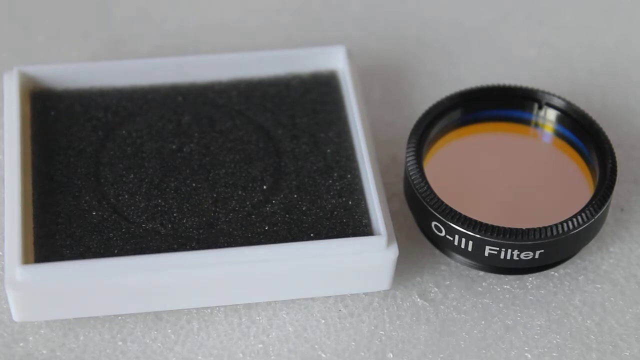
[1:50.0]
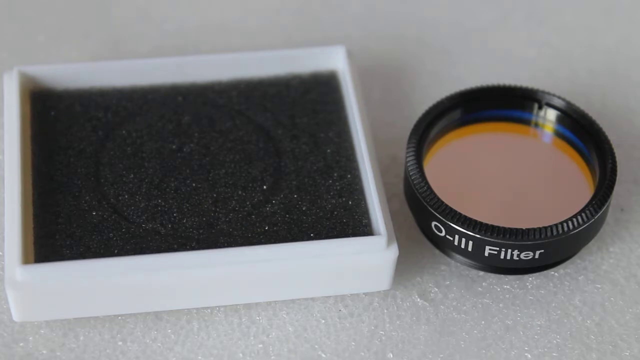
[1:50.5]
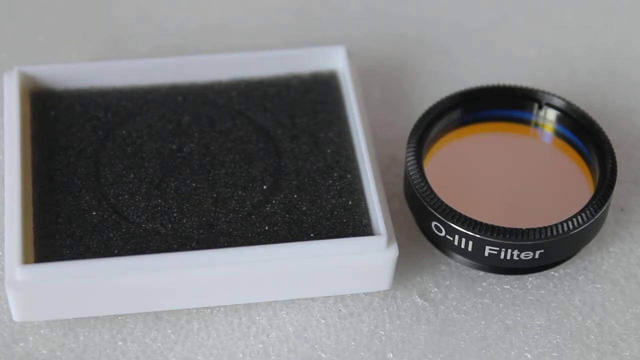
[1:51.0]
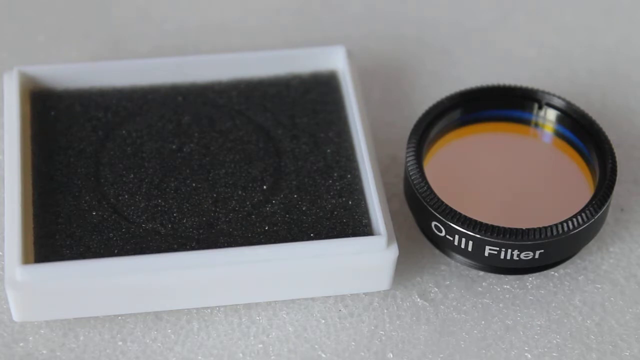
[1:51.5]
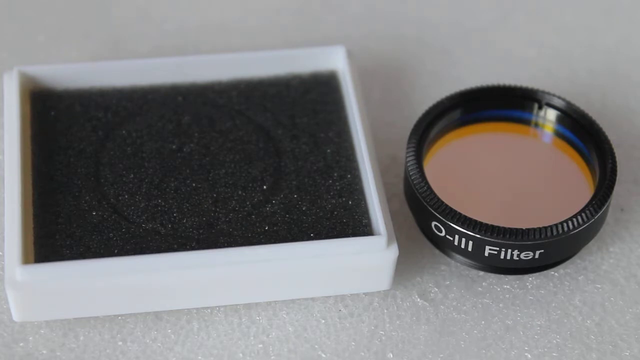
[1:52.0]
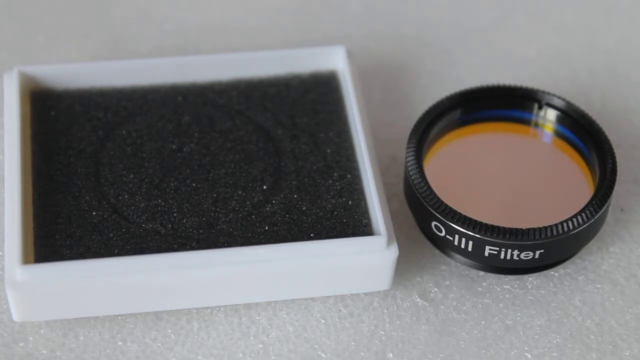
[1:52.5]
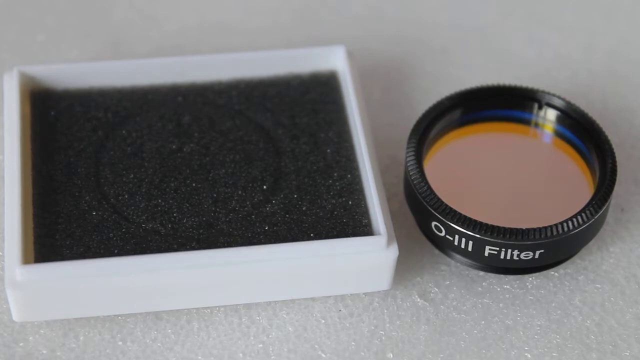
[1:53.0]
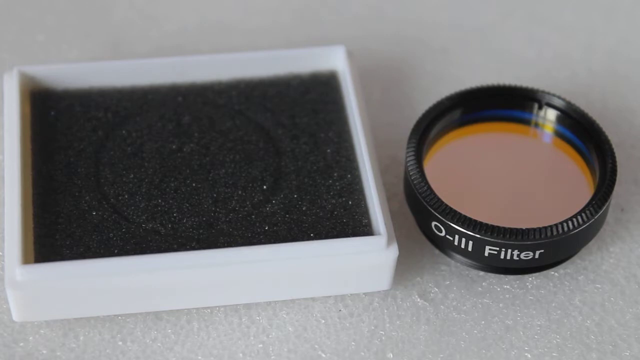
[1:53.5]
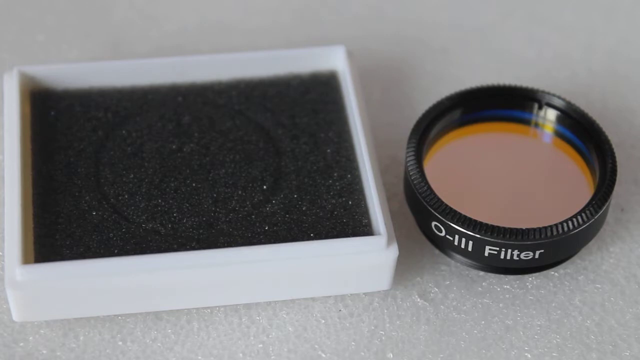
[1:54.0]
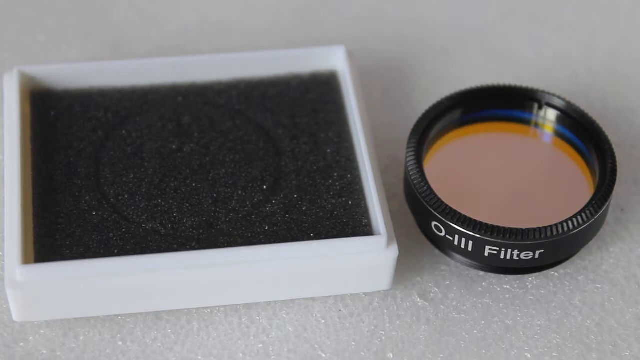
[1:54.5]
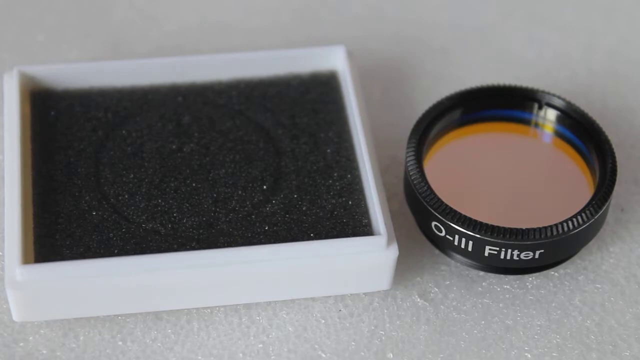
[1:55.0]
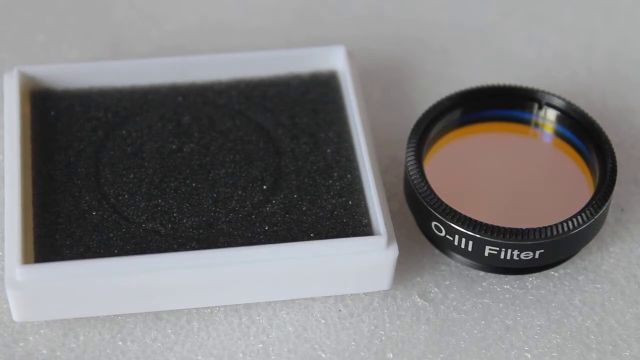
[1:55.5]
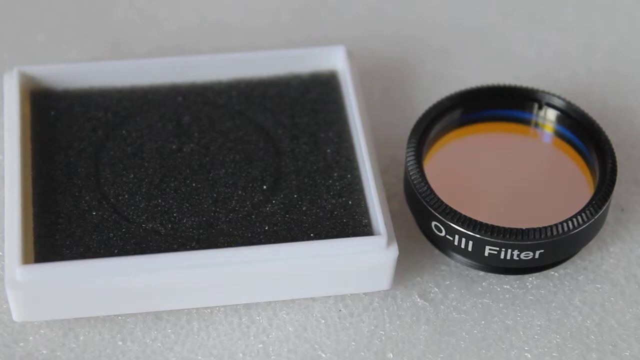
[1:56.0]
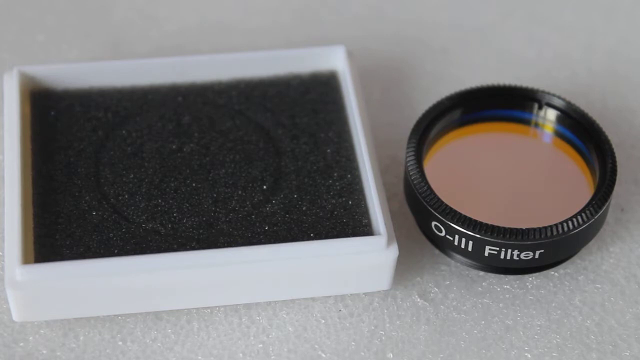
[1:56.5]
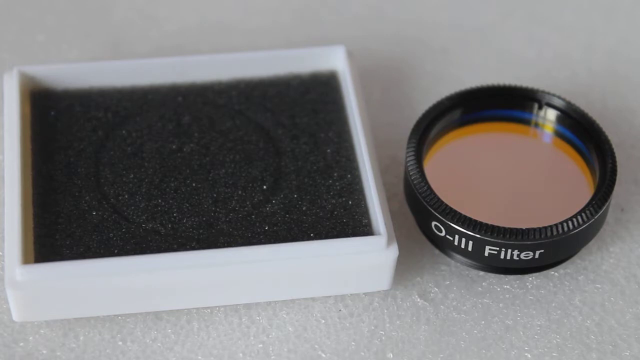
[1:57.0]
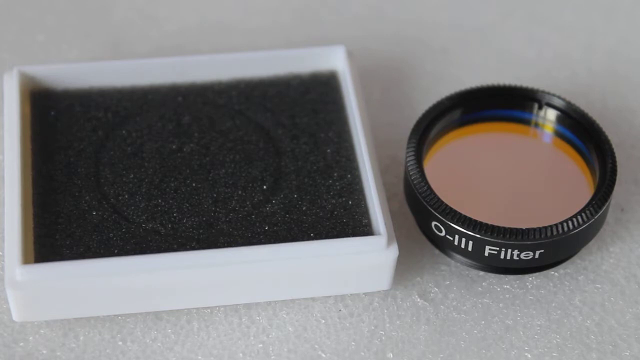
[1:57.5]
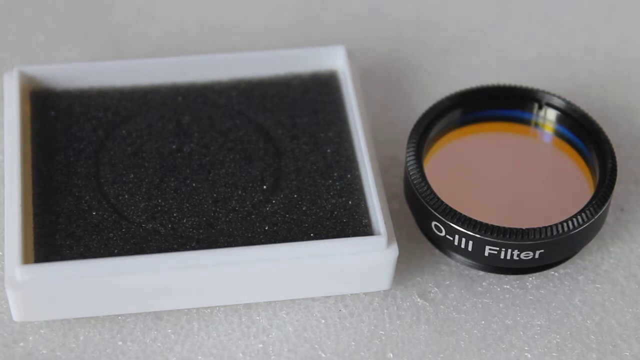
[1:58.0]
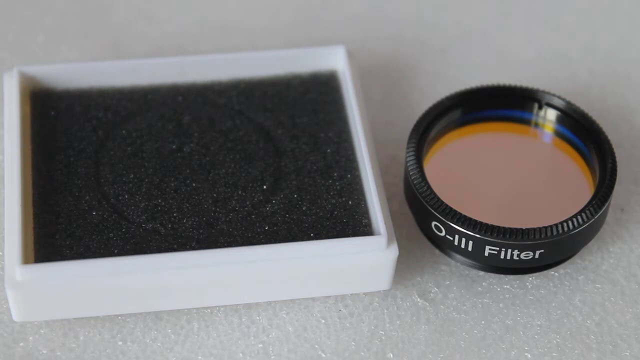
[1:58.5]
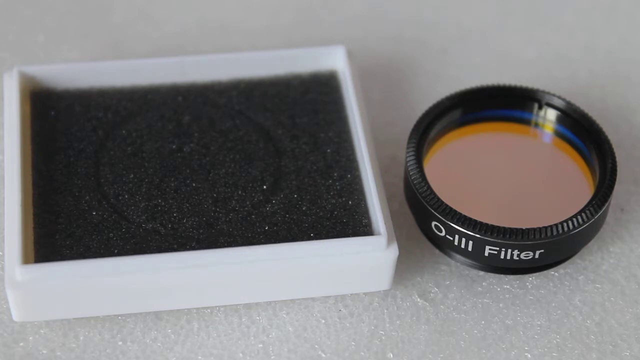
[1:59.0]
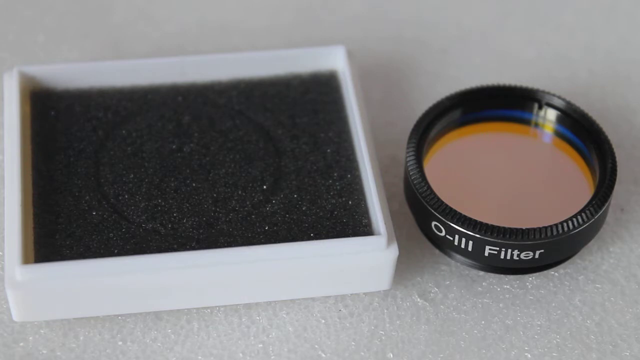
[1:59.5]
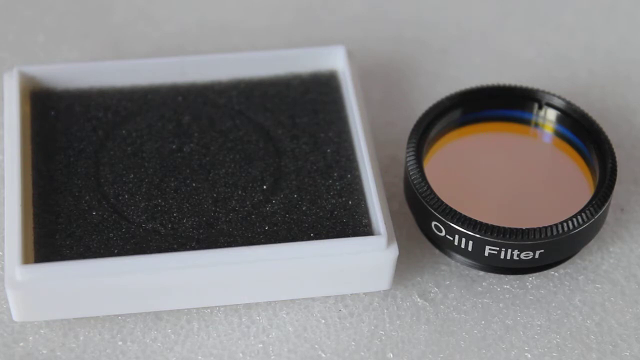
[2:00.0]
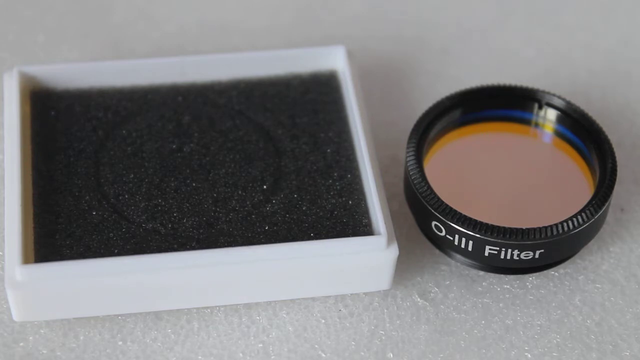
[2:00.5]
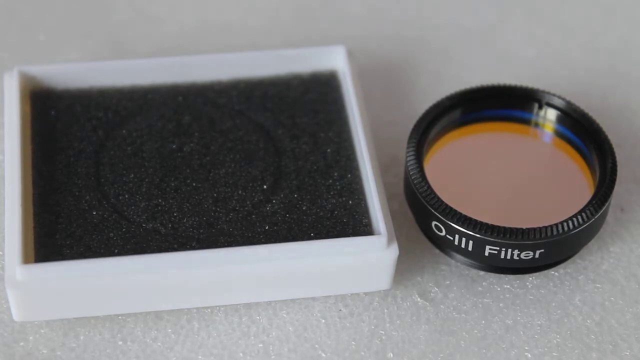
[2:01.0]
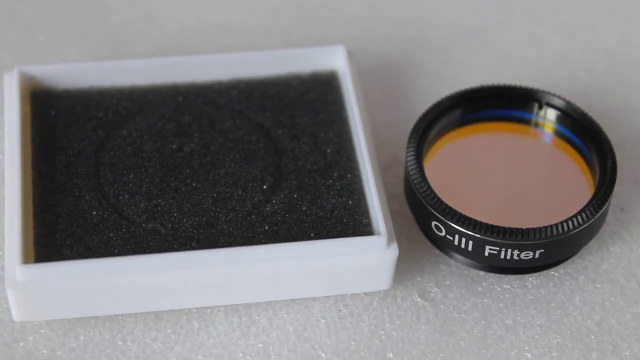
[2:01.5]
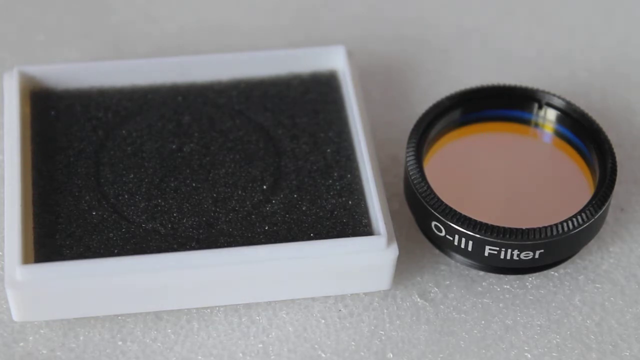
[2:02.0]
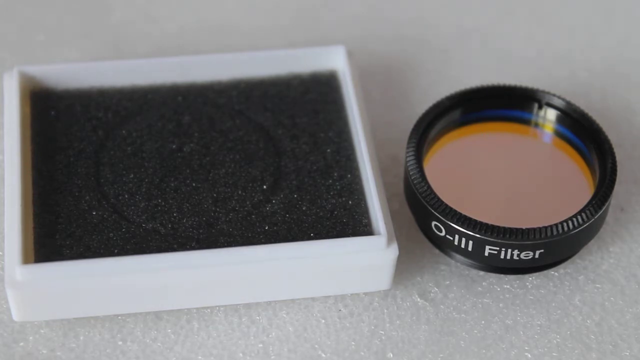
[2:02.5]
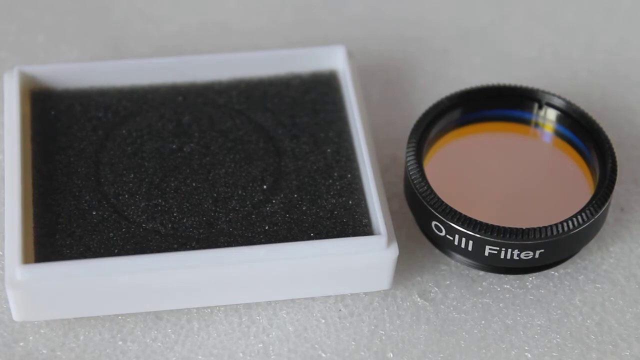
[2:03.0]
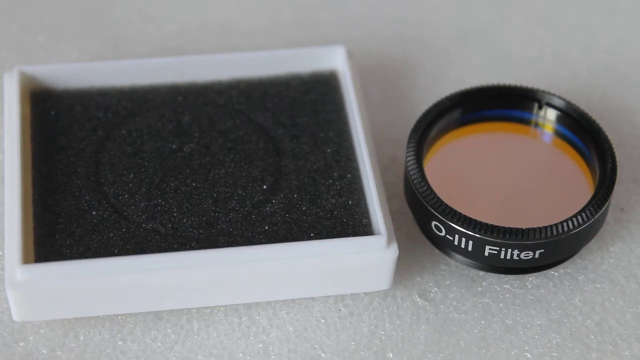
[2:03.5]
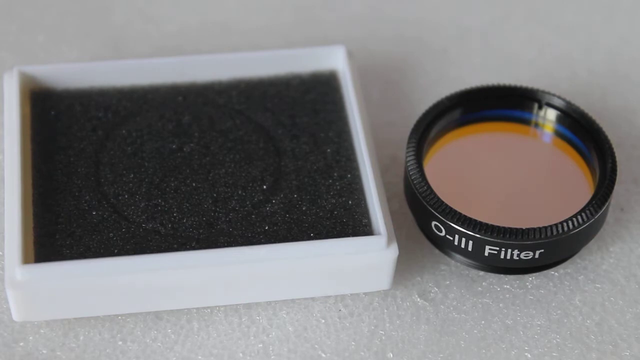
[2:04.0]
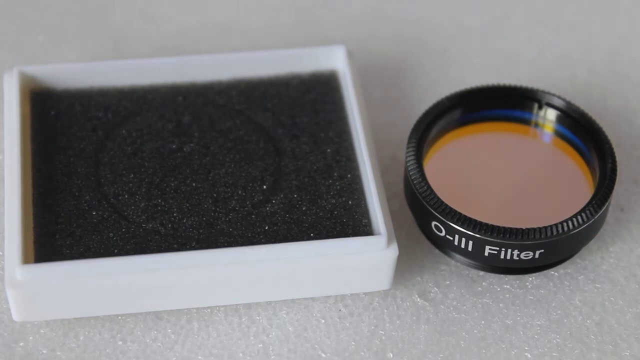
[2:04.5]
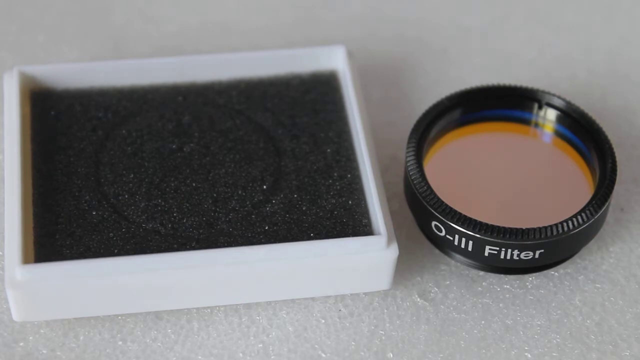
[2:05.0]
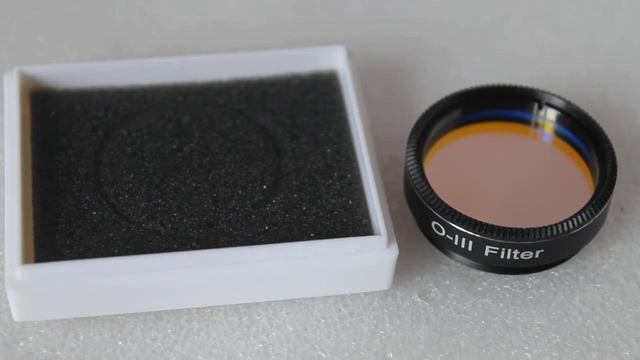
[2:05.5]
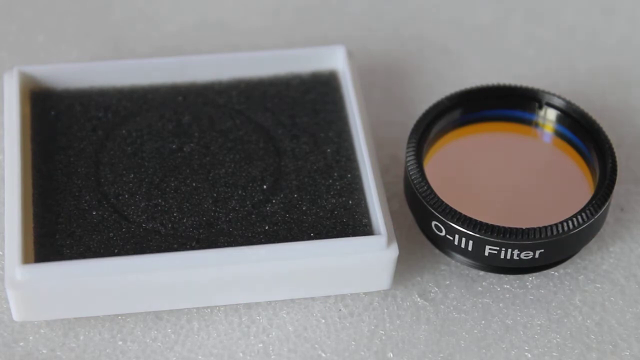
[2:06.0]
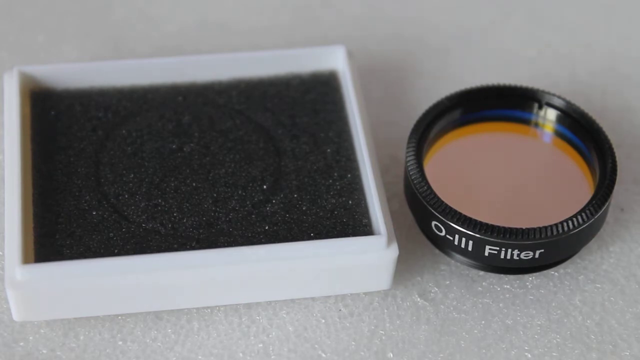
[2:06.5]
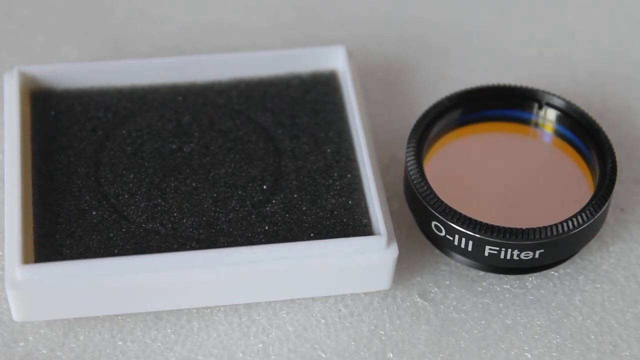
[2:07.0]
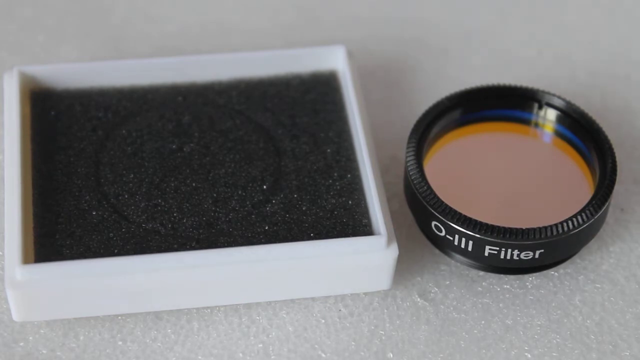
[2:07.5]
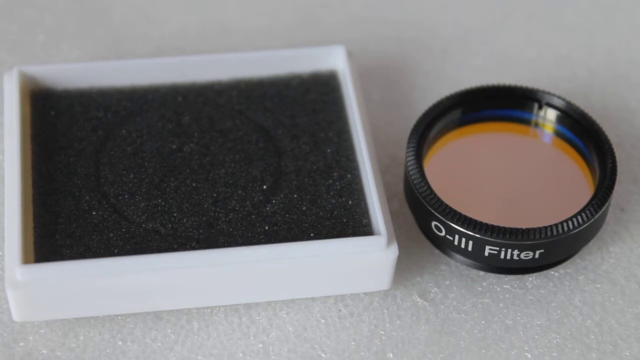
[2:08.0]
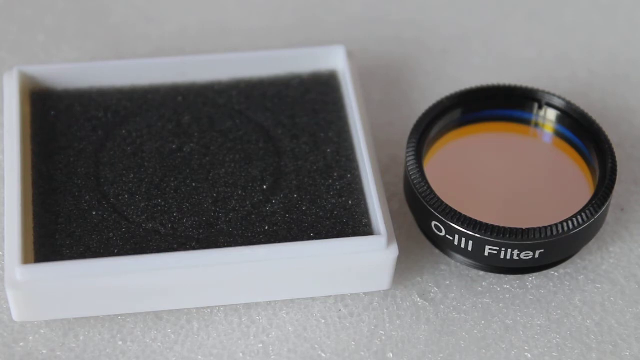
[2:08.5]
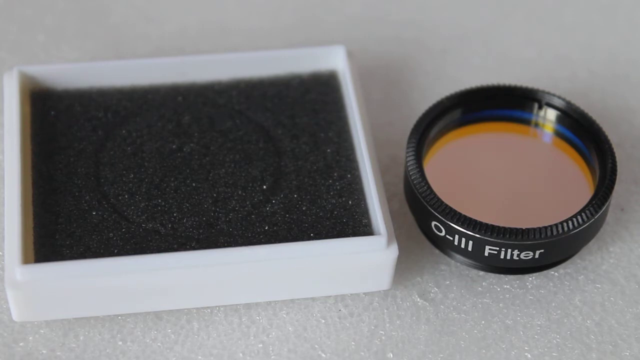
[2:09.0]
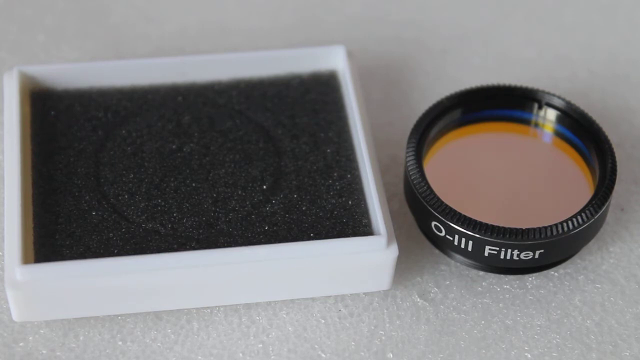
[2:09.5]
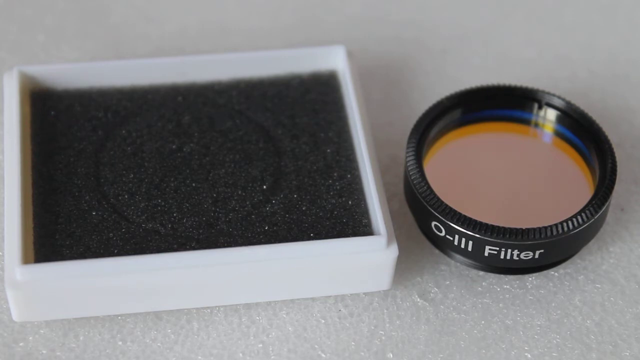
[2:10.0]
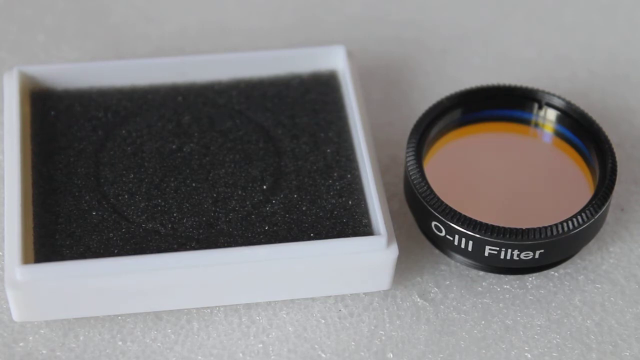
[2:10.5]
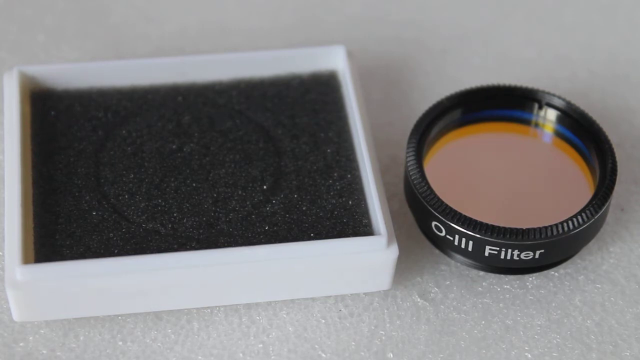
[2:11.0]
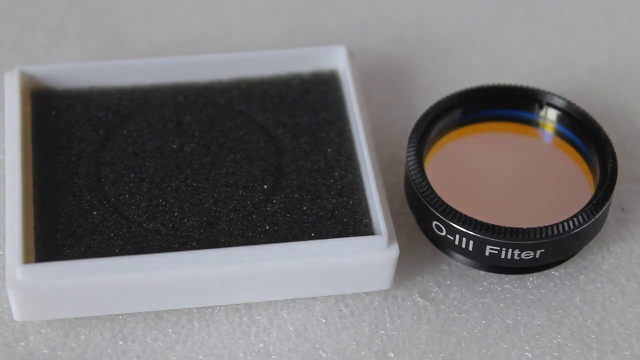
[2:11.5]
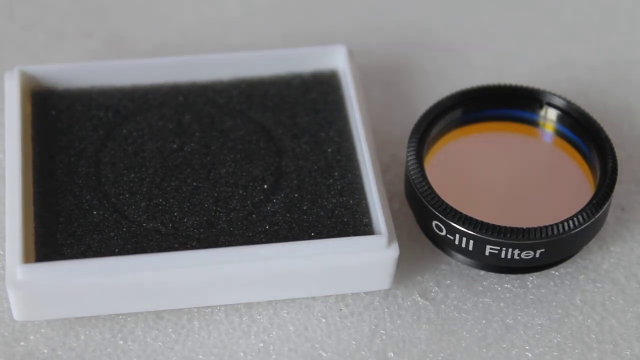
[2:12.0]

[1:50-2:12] Both objects sit on top of a white surface. On the left is the white square, with dark plastic foam, also square in shape, inside it. Next to it is the round object, which looks to be a magnifying glass due to the reflection inside it. It is black around the outside, with ridges along it, and the words "O-LLL filter" appear on its side in white. Not much else happens. The setting is indoors, with a good amount of natural light making everything clear and visible. The video is rectangular in shape.